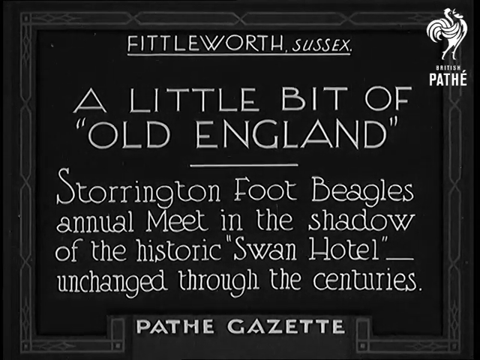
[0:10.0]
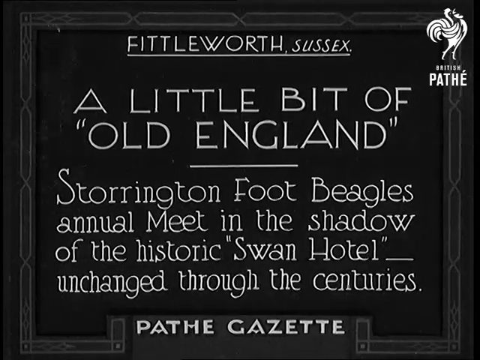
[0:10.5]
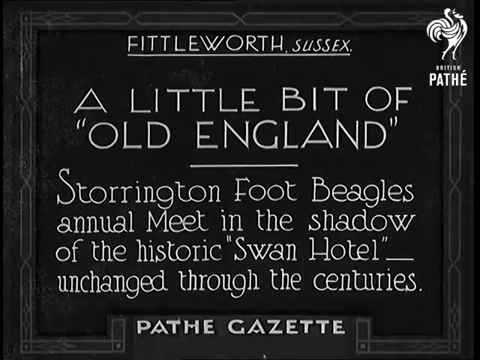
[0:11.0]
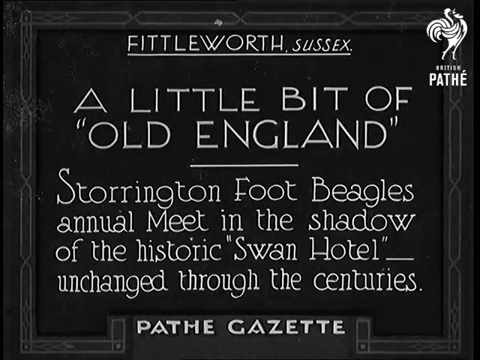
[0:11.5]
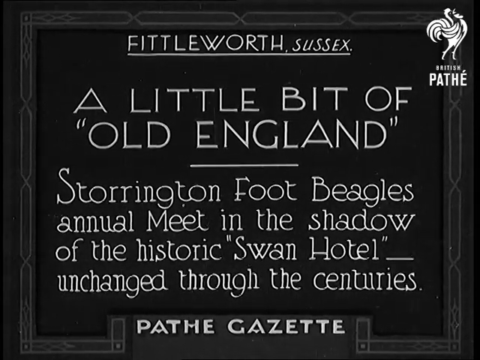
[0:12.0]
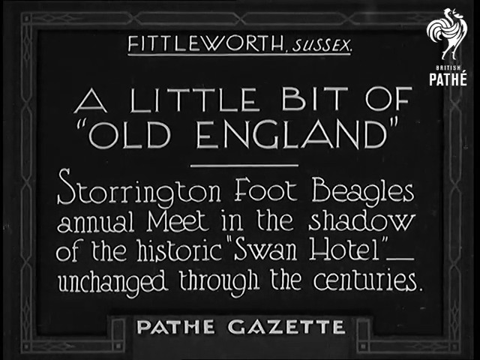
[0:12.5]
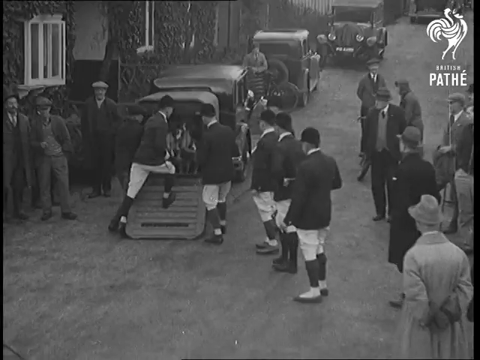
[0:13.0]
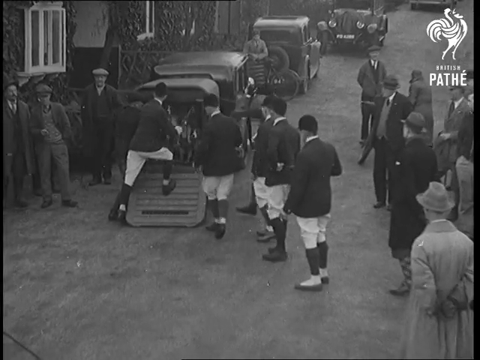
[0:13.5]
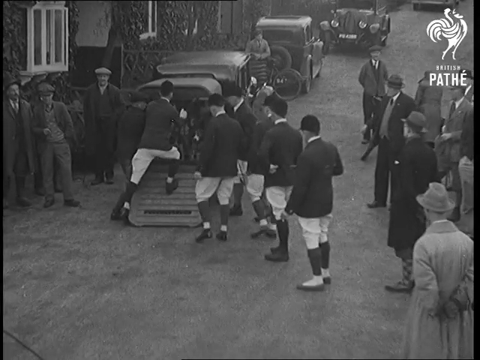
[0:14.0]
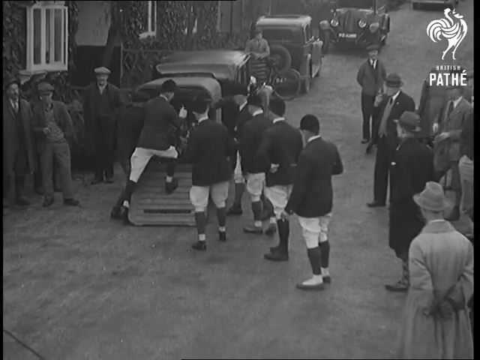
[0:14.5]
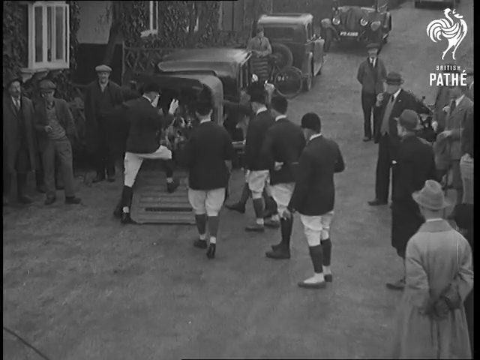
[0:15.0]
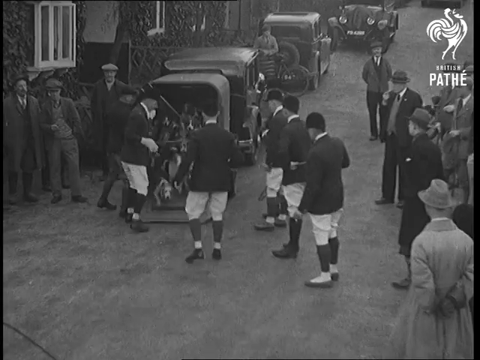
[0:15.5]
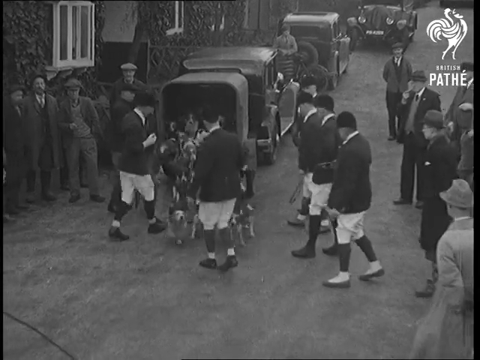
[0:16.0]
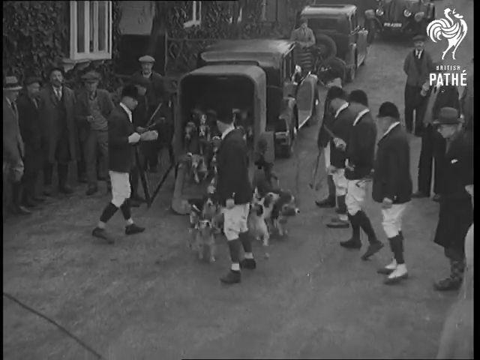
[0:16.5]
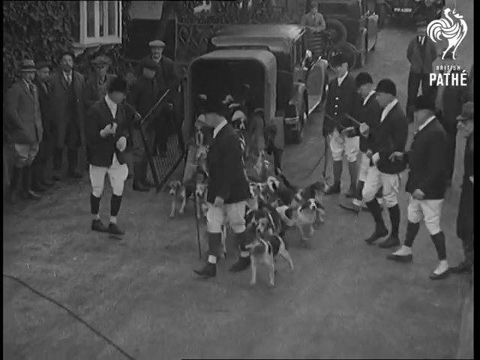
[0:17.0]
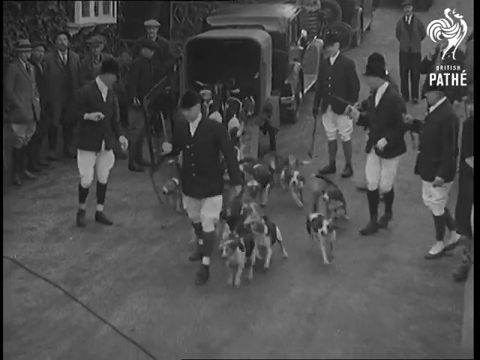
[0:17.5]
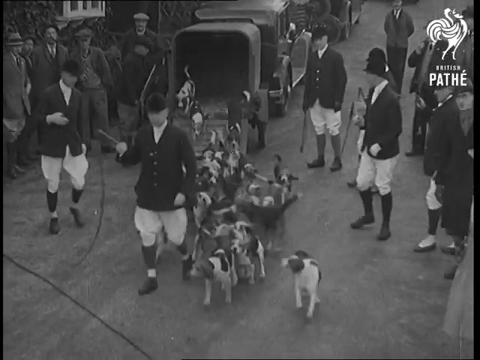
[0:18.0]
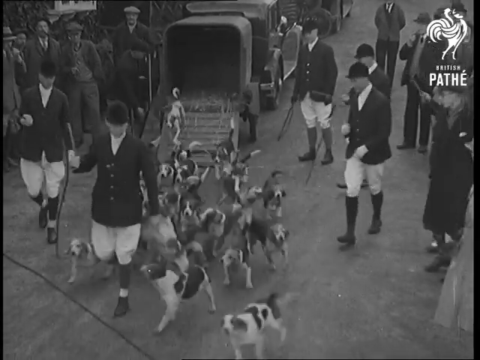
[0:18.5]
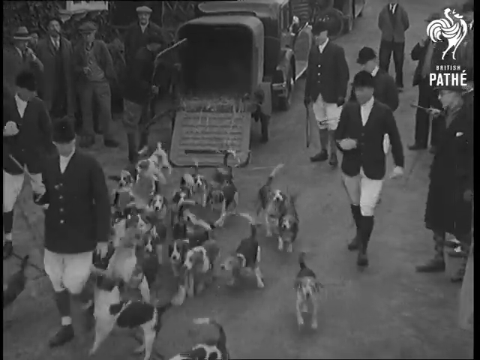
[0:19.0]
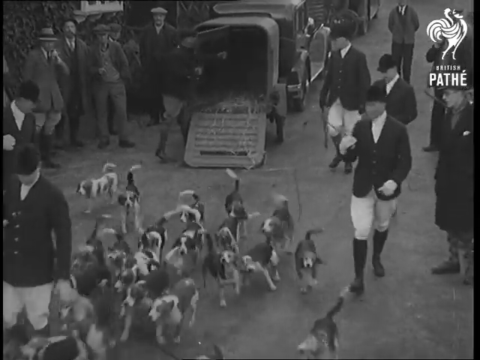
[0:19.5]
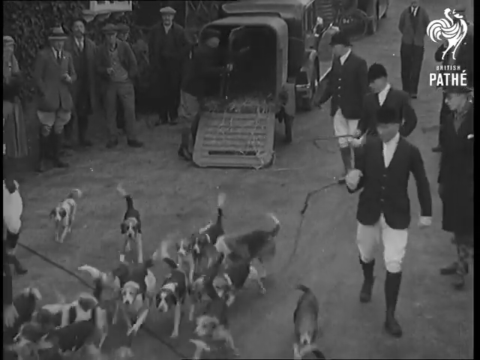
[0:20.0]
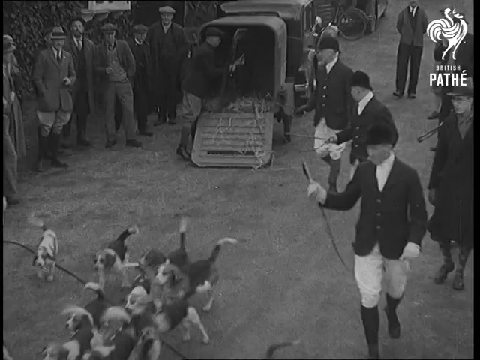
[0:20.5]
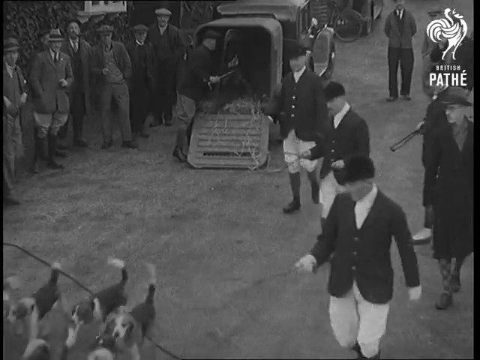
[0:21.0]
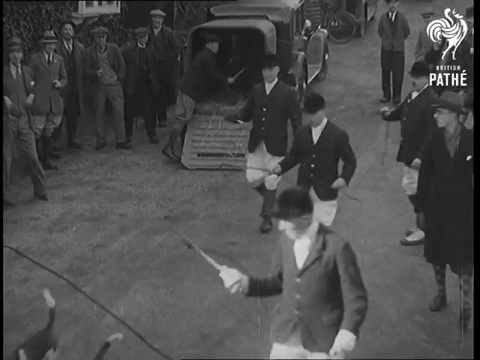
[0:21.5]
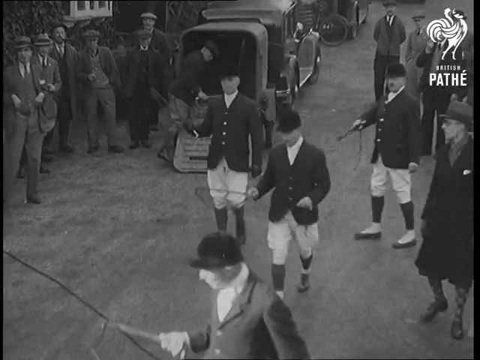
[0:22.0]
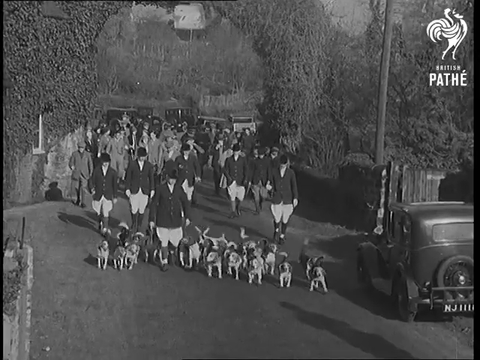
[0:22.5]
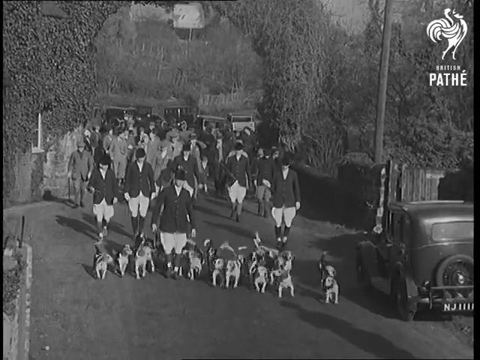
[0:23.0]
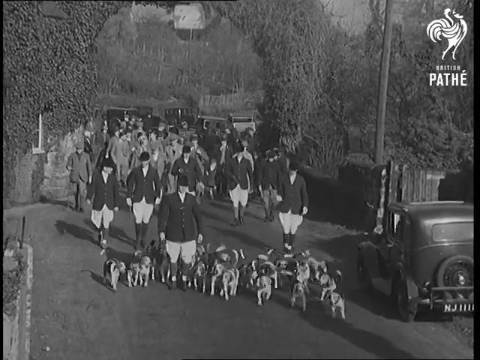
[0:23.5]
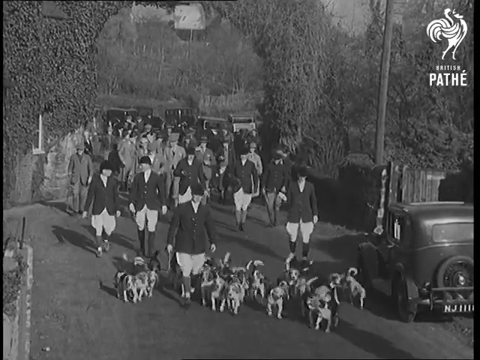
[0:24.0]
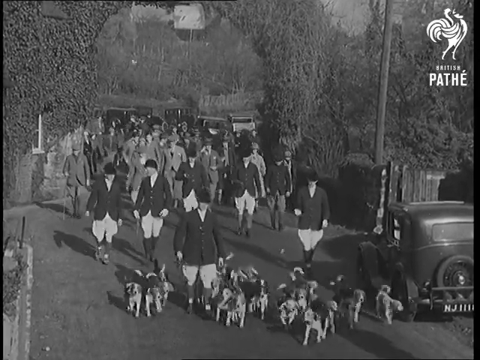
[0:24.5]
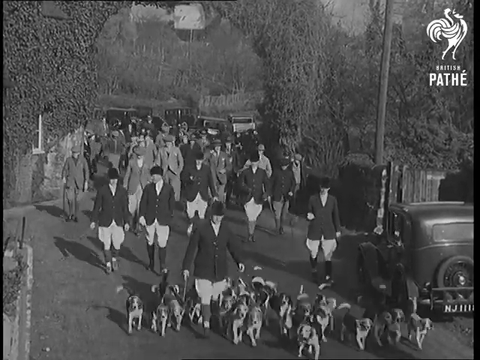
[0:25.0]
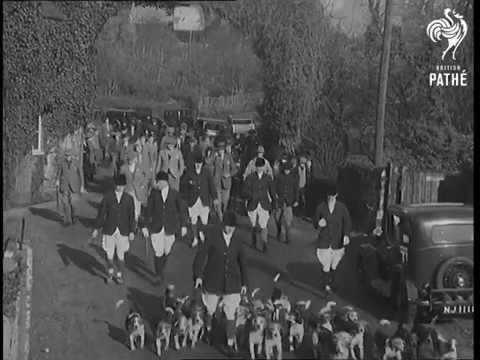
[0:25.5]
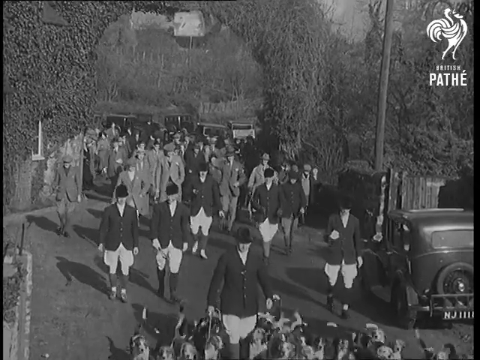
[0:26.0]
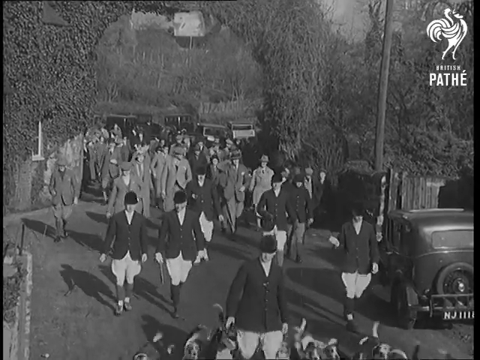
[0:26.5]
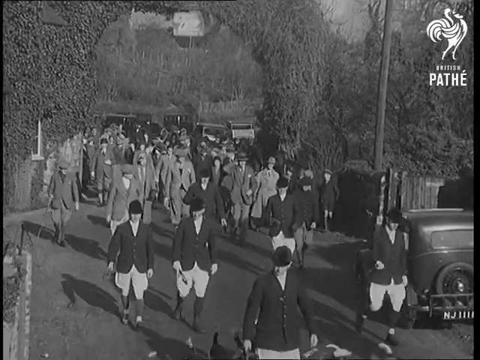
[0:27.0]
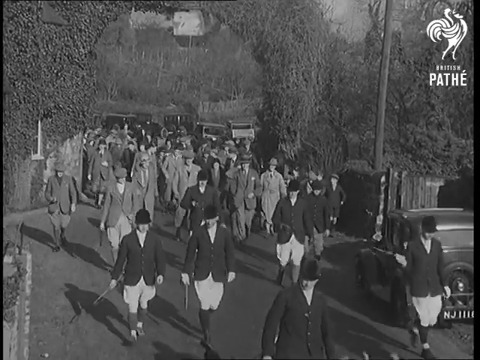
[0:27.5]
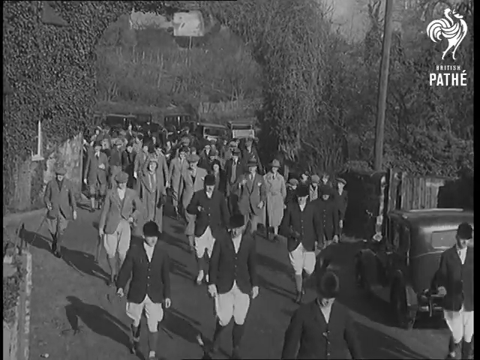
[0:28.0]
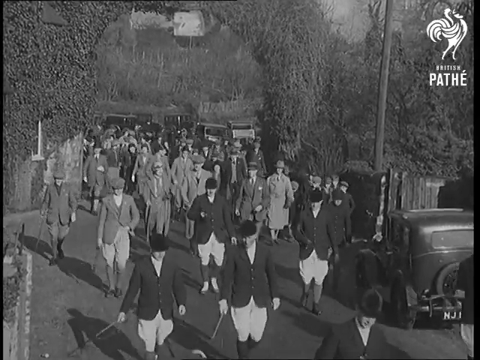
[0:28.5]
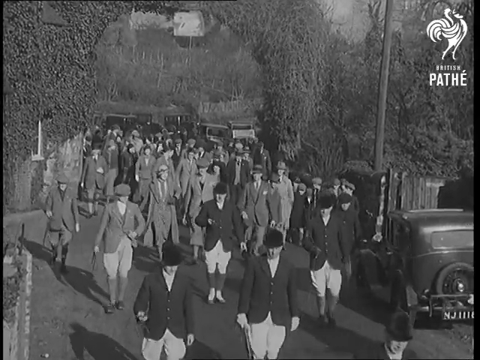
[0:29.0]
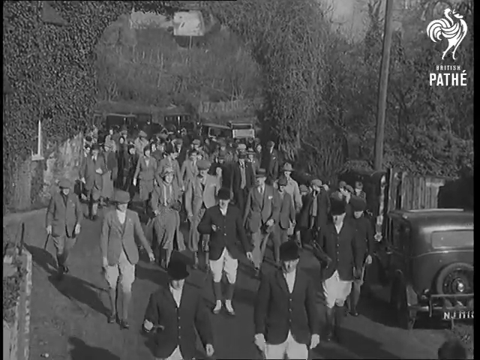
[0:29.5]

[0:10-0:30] In black and white, a black background with a white border around it appears first. At the top right is a watermark of a rooster with "Pathé" underneath. White text on the black background reads "Fiddleworth, Sussex" at the top, then a title reading "a little bit of Old England". At the bottom it reads "Storrington Foot Beagle's Annual Meet in the Shadow of the Historic Swan Hotel, Unchanged Through the Centuries", and underneath is white text reading "Pathé Gazette". There is a bit of static white around it, so it looks like a very old video. The video then cuts to black and white footage of what looks like a road with three cars parked on its left side and many people gathered around. In the middle are around seven men, all wearing what look like black coats, white pants, black boots and a black hat. They open the back of one of the cars, and suddenly over 20 beagles rush out of the back of the truck and follow the men as they walk toward the bottom left of the frame. The men are all holding what look like sticks with a little whip at the end. The dogs are wagging their tails and walking energetically toward the bottom left. The scene then changes to one where there seems to be a very large arch of green bushery in the background. Around 50 or 60 people walk through the arch, led by the men in the coats and hats, walking toward the camera. The beagles follow the man in the lead, surrounding him, their tails wagging. The people walk toward the bottom right past the arch. The people behind the men in the coats are also wearing coats and suits and what looks like top hats, so it looks like a very fancy occasion; most of them wear coats and pants.